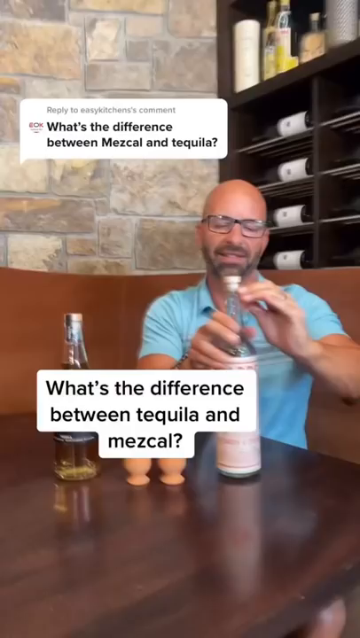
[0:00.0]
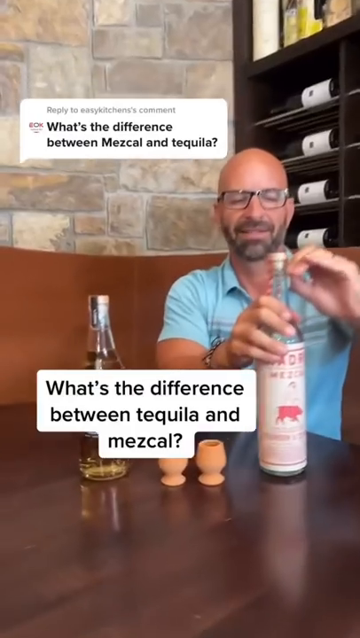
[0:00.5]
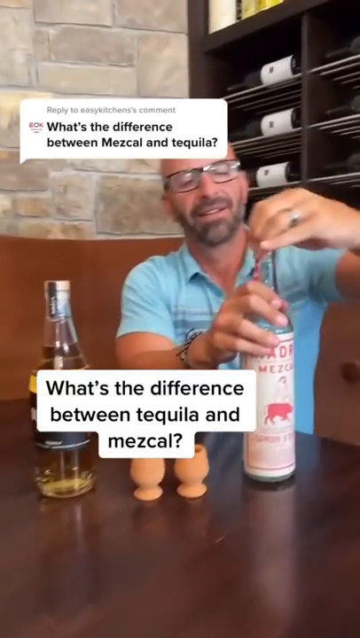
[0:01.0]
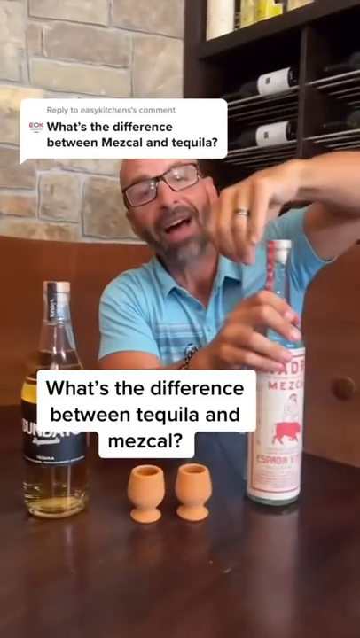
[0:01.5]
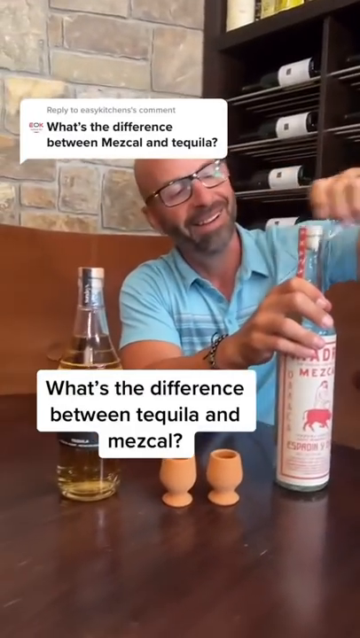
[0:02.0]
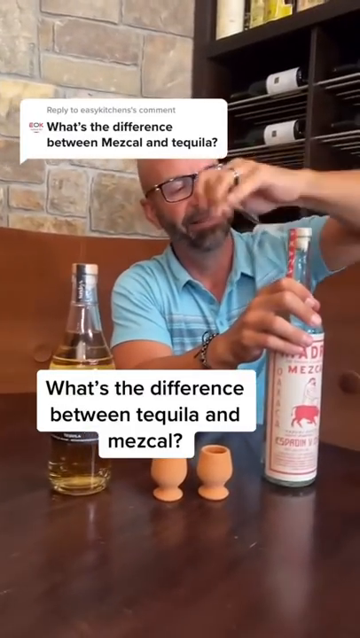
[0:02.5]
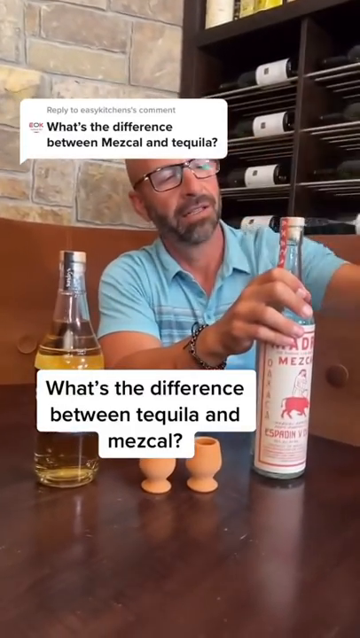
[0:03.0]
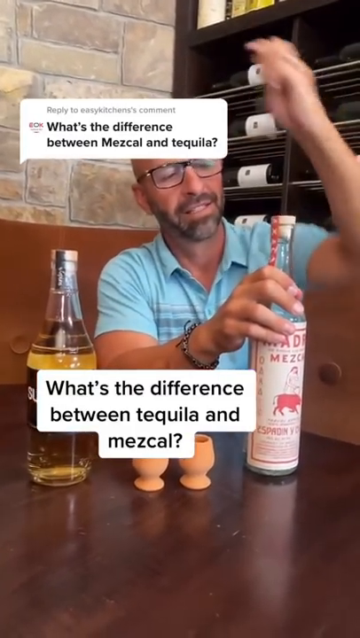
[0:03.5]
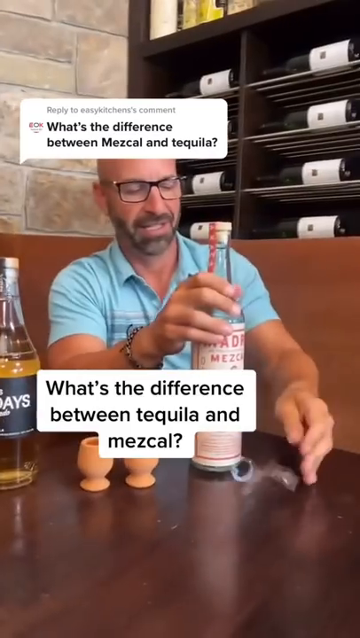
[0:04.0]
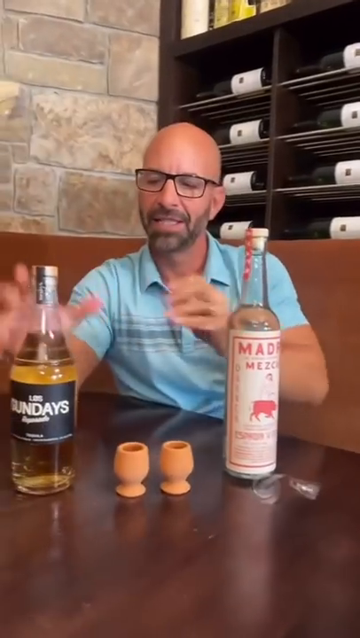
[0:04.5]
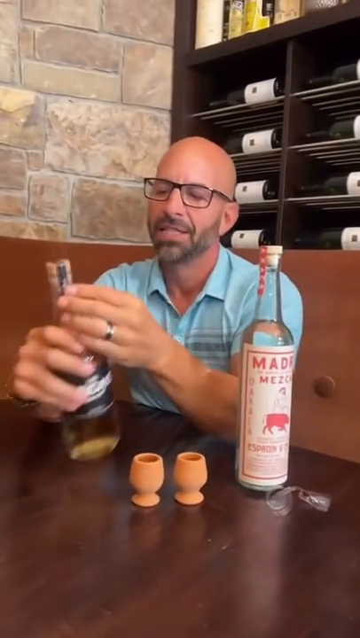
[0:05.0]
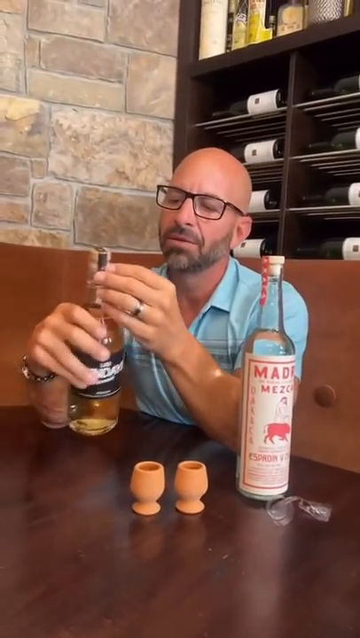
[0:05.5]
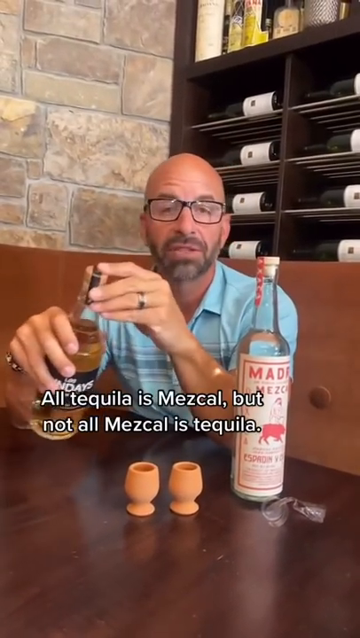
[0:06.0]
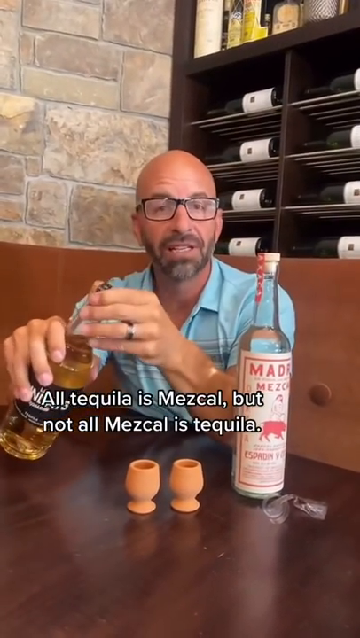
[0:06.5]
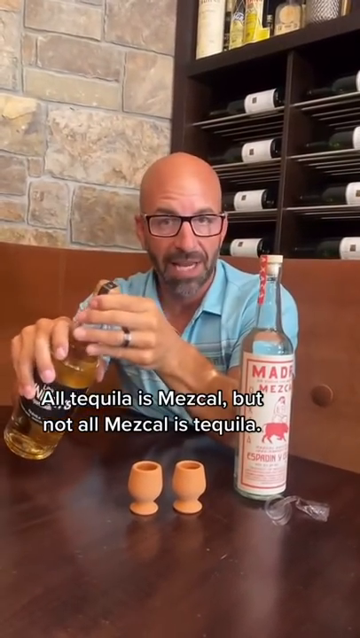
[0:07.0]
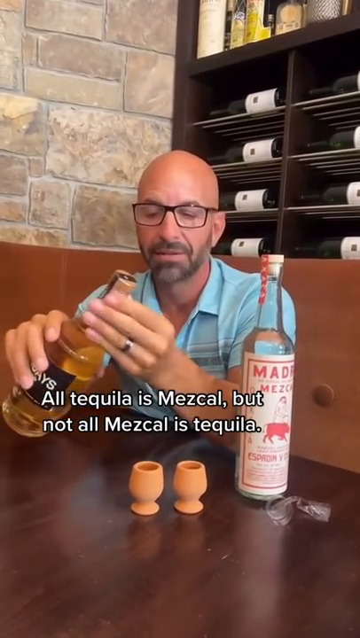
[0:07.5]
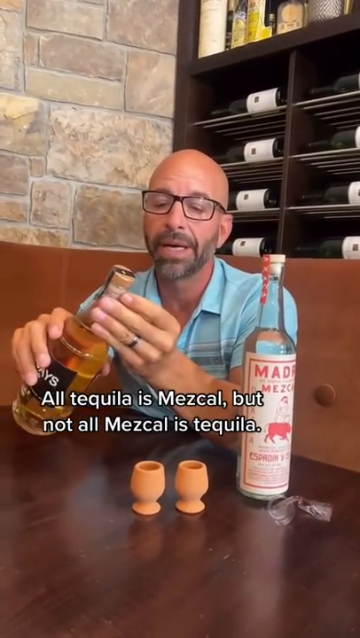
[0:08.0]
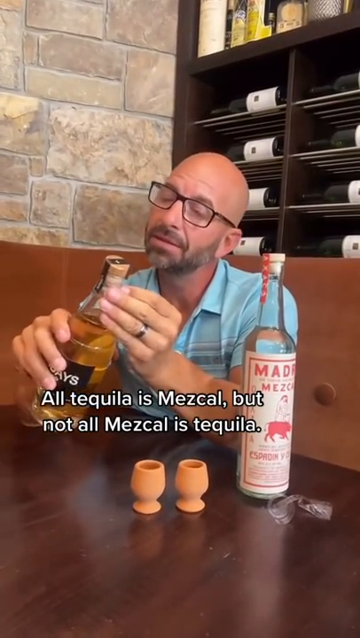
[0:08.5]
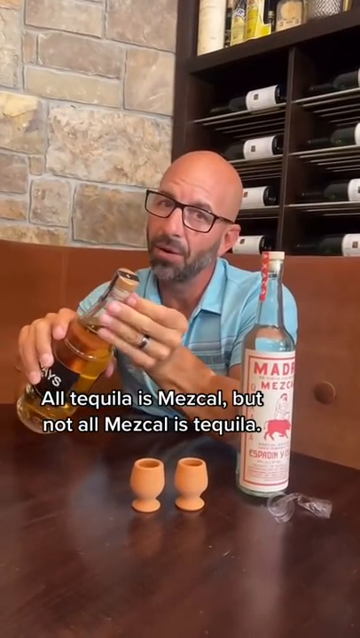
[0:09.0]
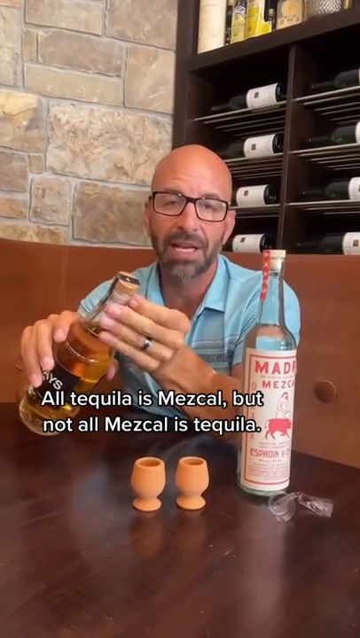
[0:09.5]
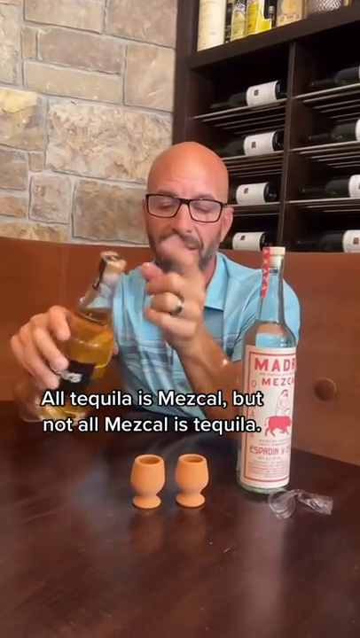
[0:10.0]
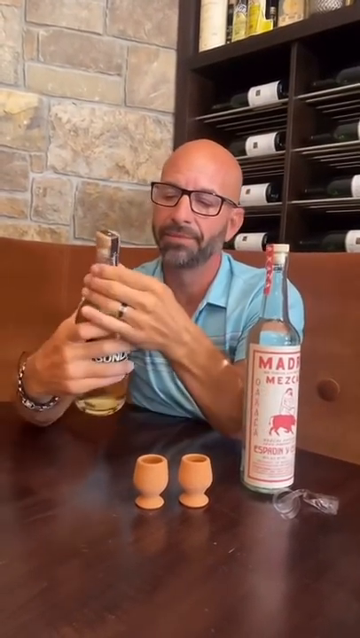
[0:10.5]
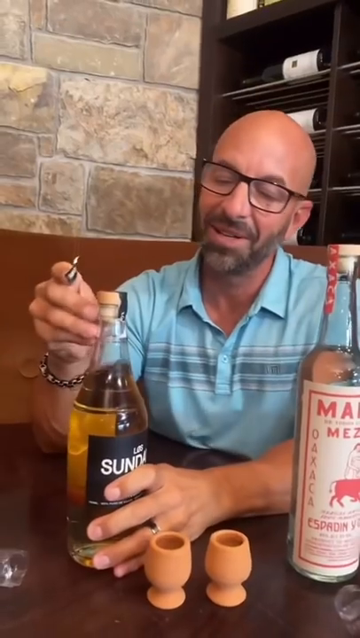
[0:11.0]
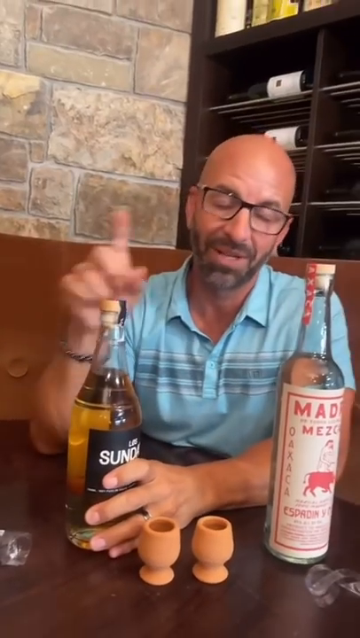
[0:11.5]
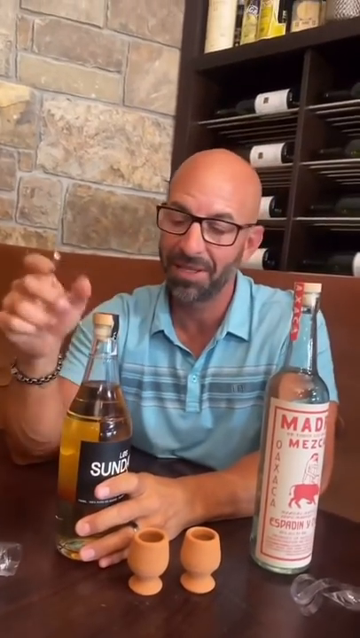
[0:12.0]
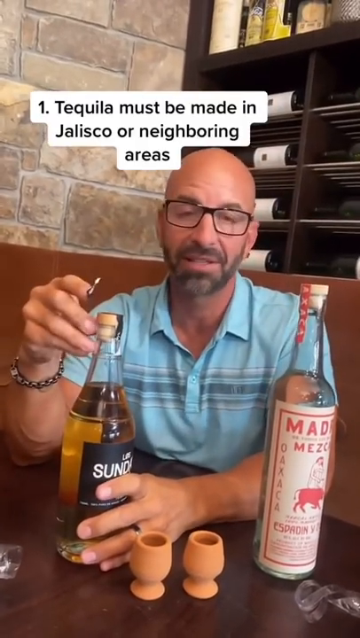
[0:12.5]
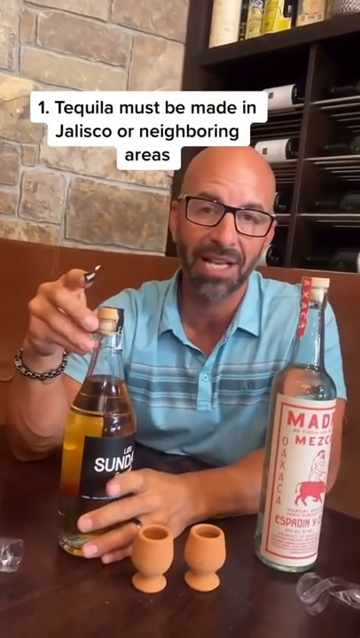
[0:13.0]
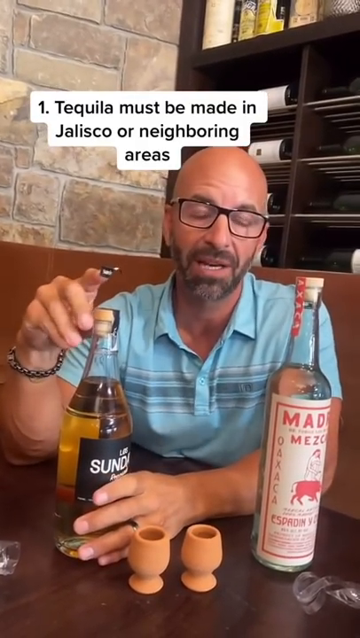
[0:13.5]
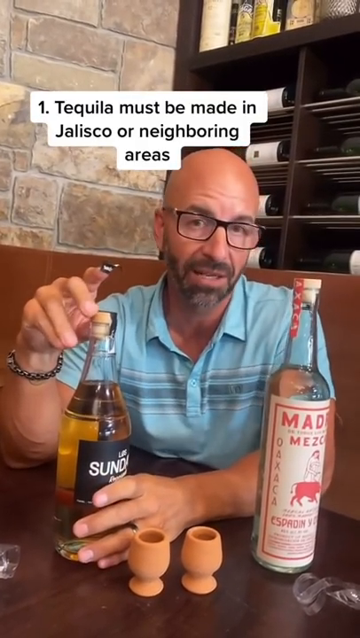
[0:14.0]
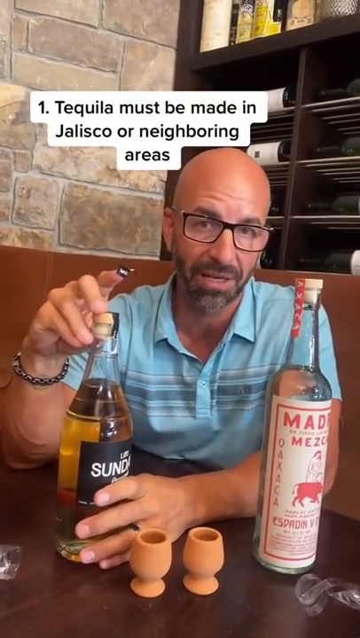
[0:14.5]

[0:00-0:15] A bald man with glasses and a beard, wearing a blue shirt, is apparently in America, as everything is in English. He sits in a corner booth in what appears to be a bar and opens two bottles of liquor, apparently one tequila and one mescal, since both are labeled on screen along with the question "What is the difference between tequila and mescal?" He smiles as he unwraps the bottles, and two clay shot glasses are on the table. He says that all tequila is mescal, but not all mescal is tequila. He keeps talking, and then says that tequila must be made in Jalisco or neighboring areas, whereas mescal doesn't have to be.